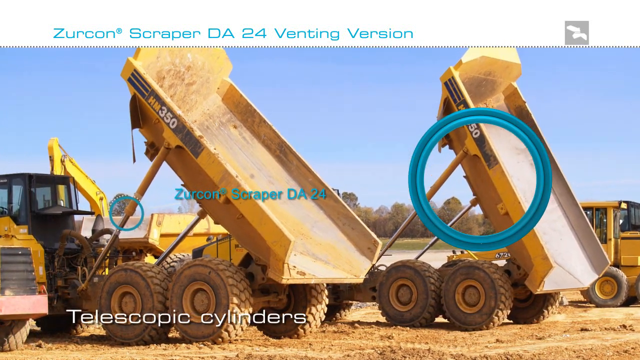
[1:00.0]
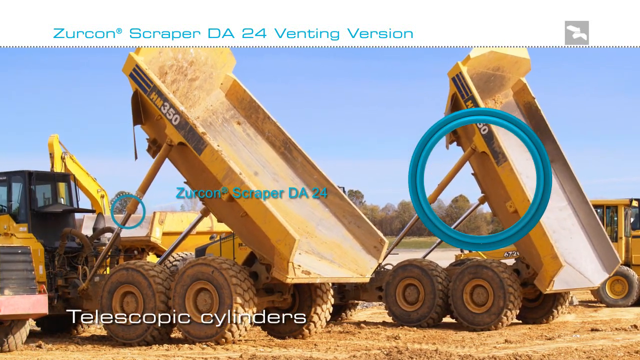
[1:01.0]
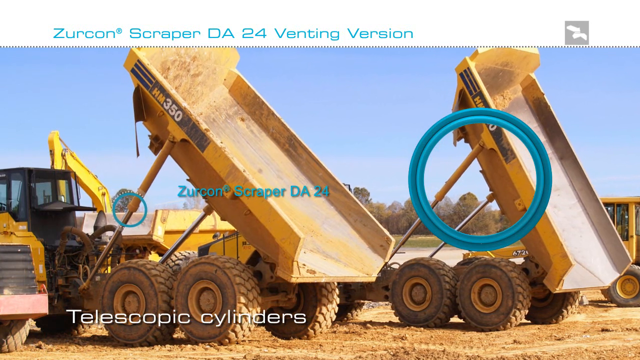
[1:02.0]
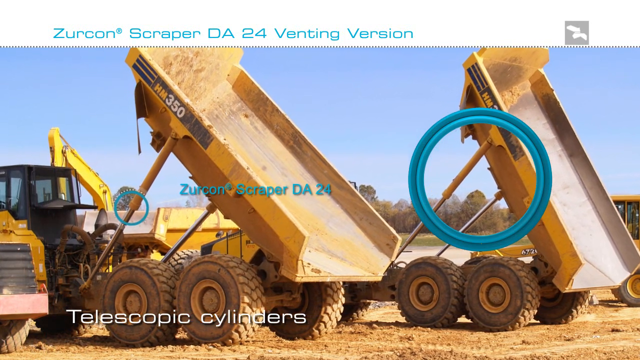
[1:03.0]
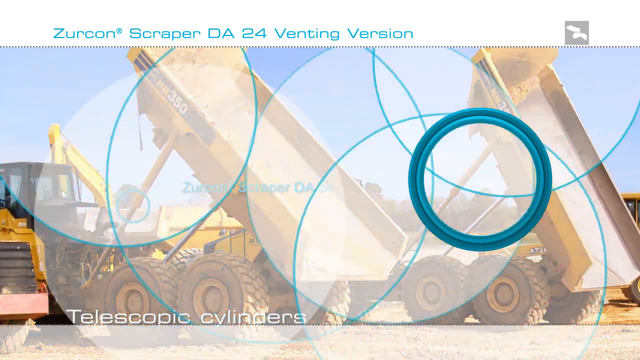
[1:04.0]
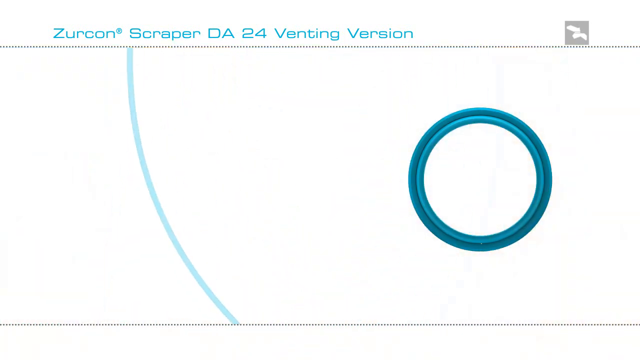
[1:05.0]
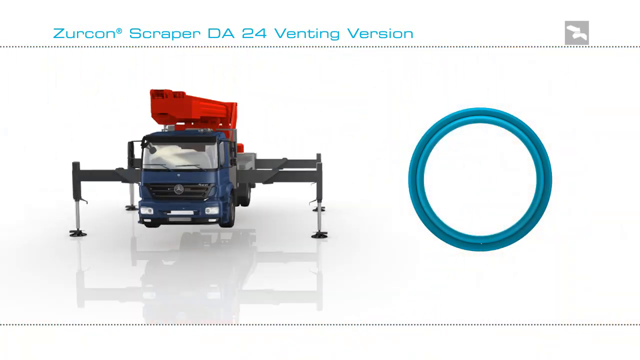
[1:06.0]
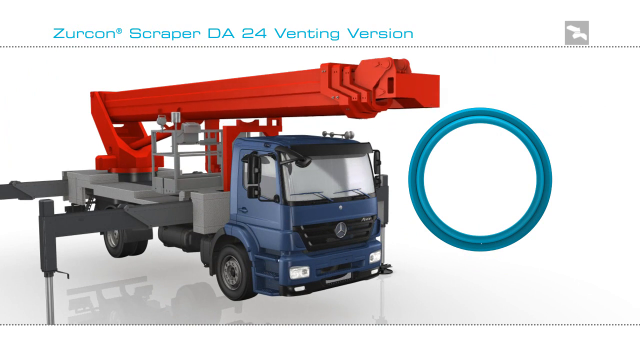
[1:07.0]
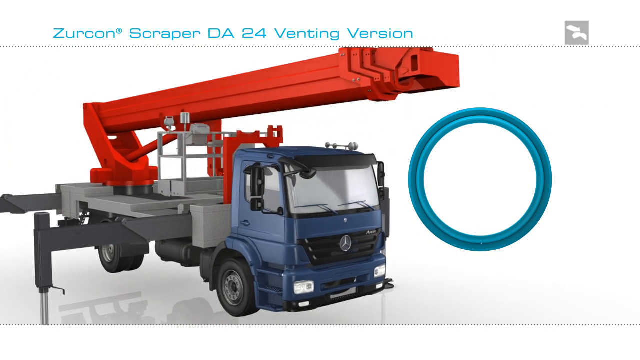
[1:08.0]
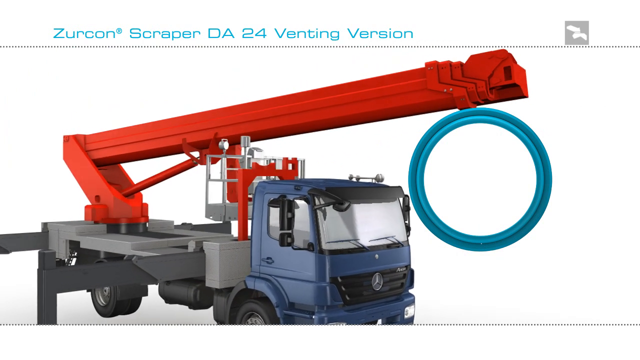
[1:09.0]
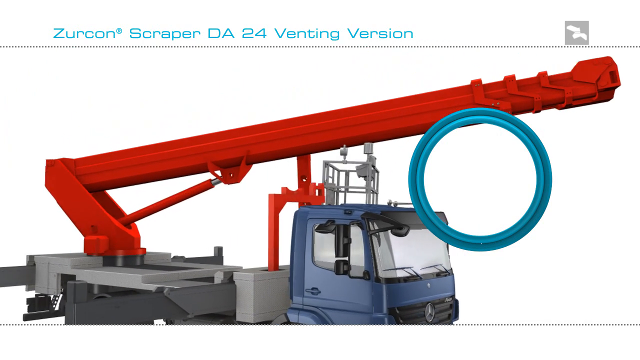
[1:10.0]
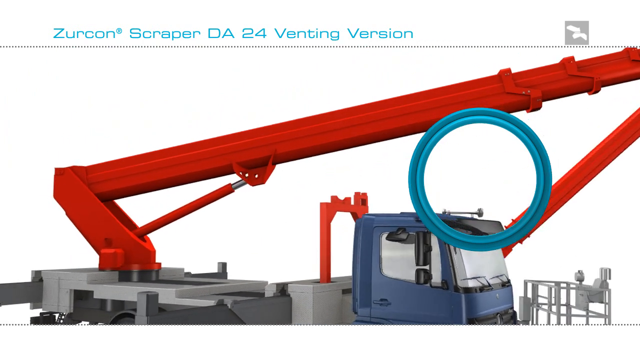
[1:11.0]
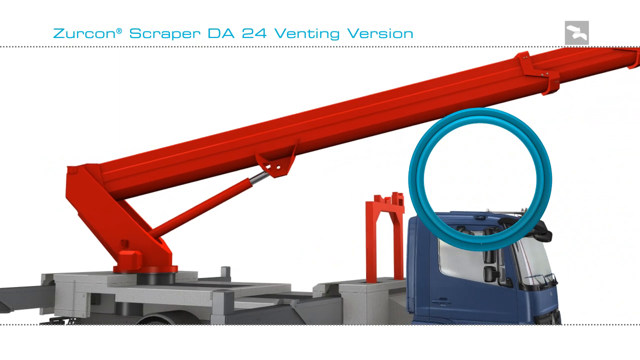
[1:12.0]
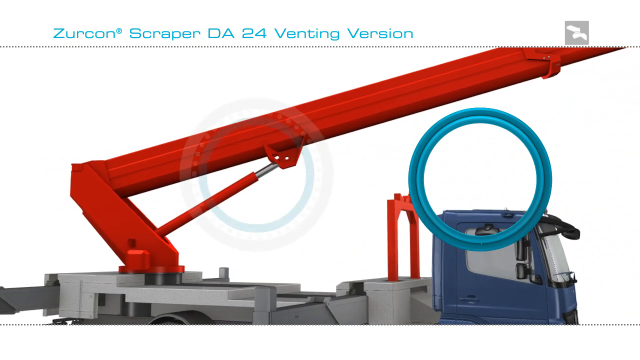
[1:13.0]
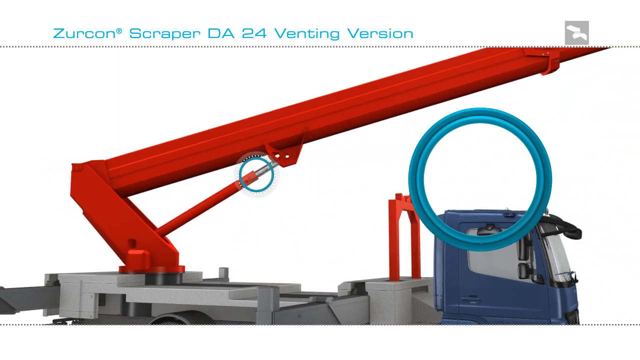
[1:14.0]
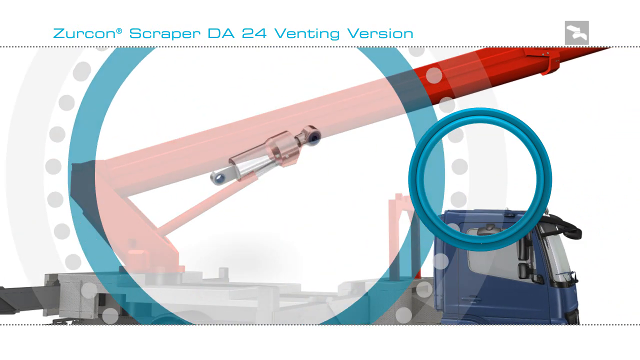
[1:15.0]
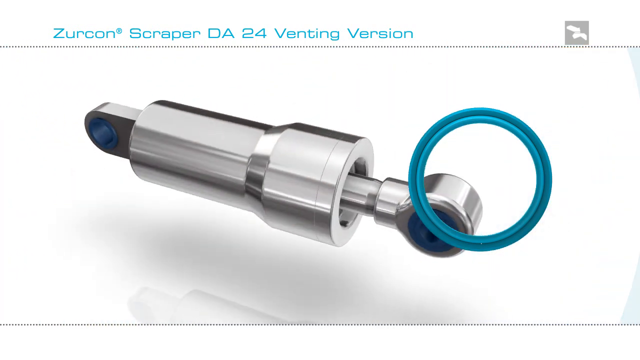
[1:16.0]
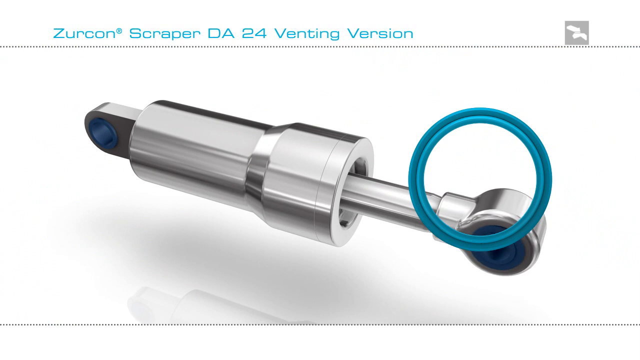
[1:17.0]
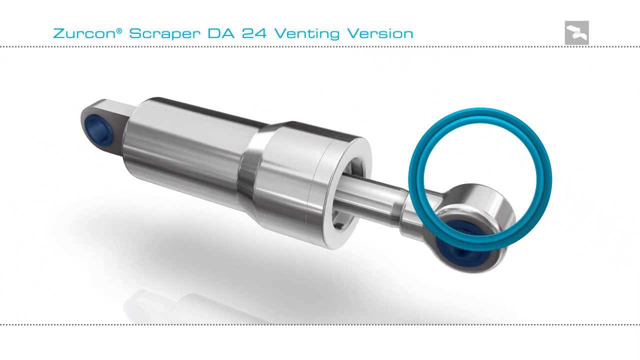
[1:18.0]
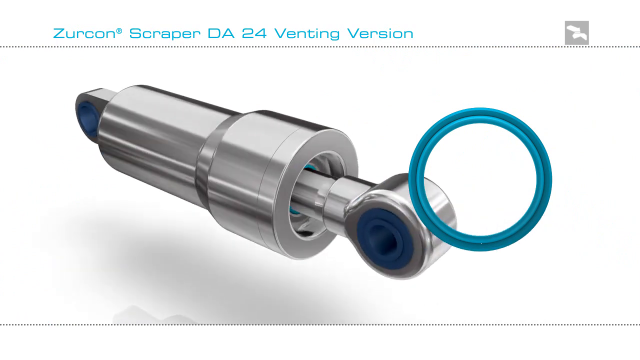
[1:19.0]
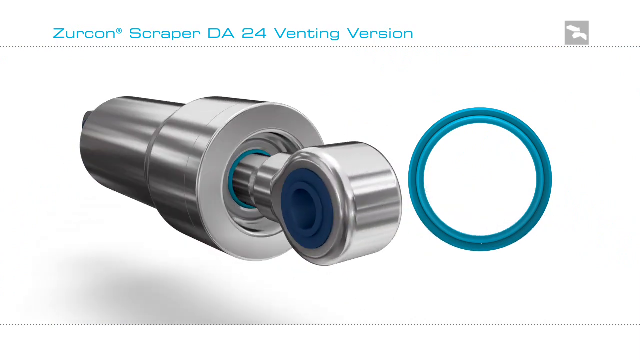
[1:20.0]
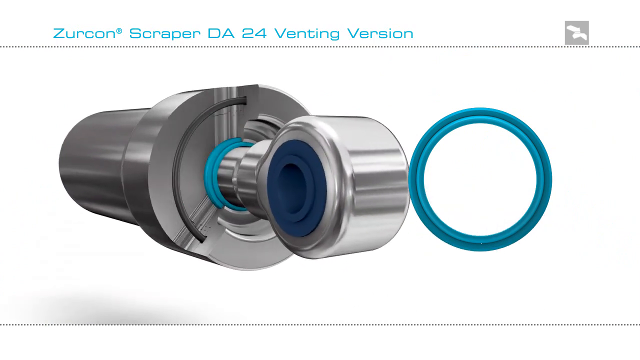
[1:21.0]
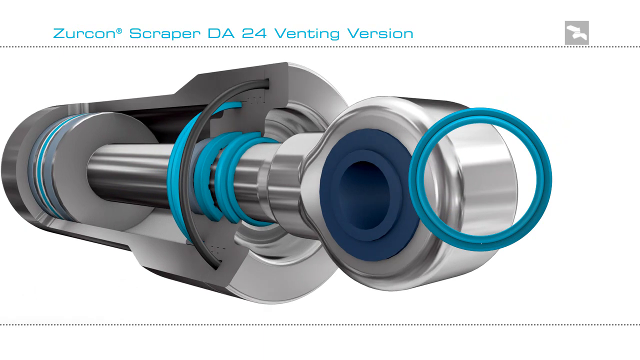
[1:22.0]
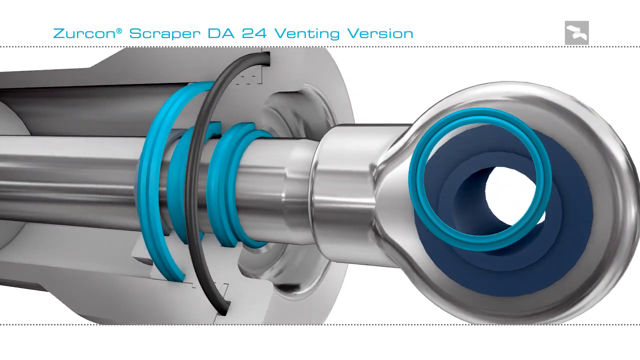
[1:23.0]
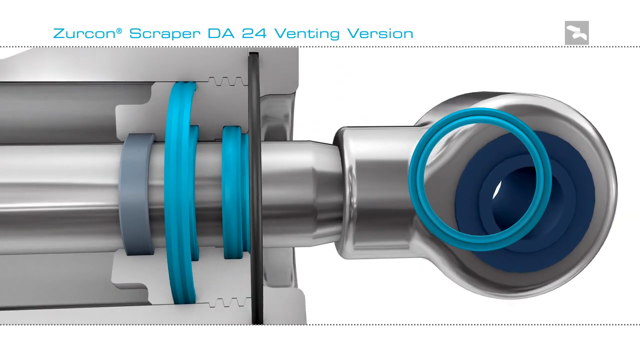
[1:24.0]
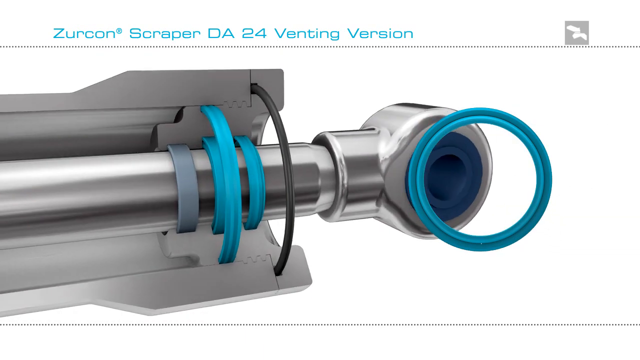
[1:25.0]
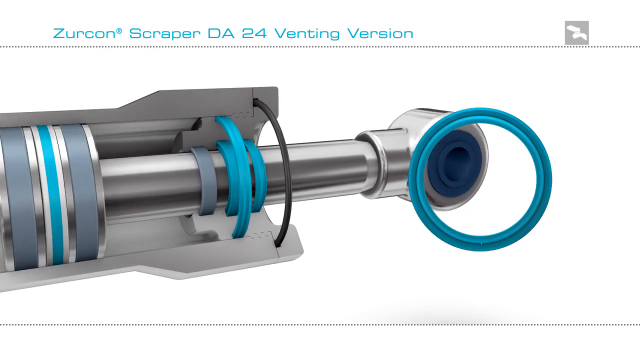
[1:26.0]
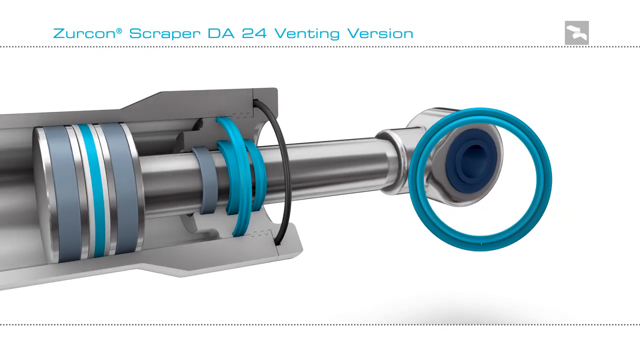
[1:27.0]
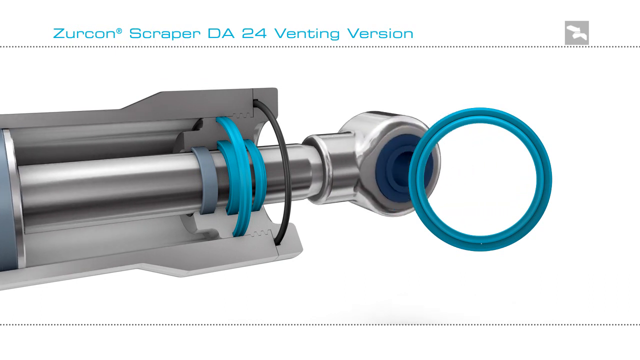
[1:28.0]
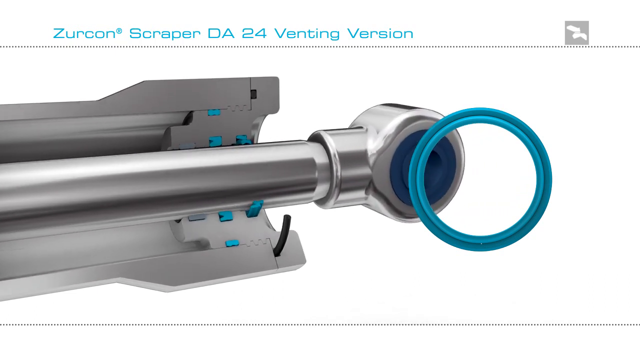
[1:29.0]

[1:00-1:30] Two tractors have beds being lifted by hydraulics attached to the tractor, and both have four wheels in the back. In the forefront is blue text reading "Zircon Scraper DA24" along with a light blue circle. The camera seems to zoom in on the picture, and a whole bunch of white circles with borders come in. The whole screen turns white, and a machine that looks like another tractor comes in. It has wheels, and also black arms sticking out at the front and back that keep it balanced; a red arm is attached to the back of the vehicle. Blue text on top reads "Zircon Scraper DA24 venting version". The machine is computer animated. The arm seems to have a white cage that appears to be a place where a person can stand while the arm lifts it up. The view then zooms in on a part that seems to be silver and almost looks like the part that lifts the arm, showing its interior, which is all silver.